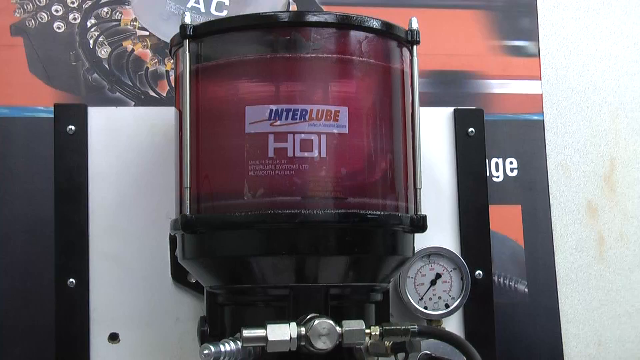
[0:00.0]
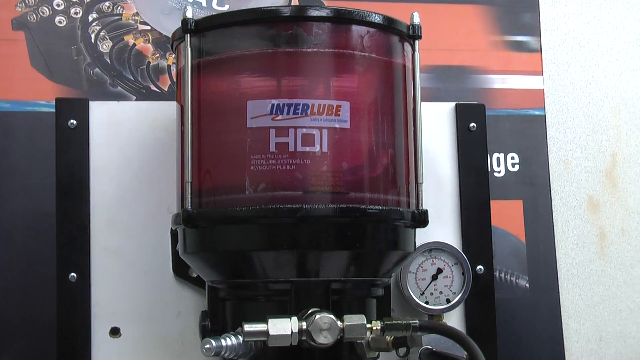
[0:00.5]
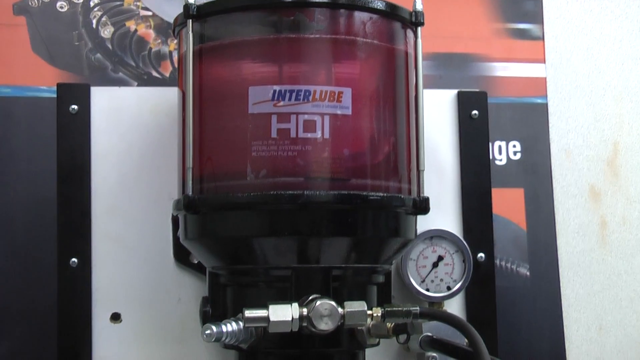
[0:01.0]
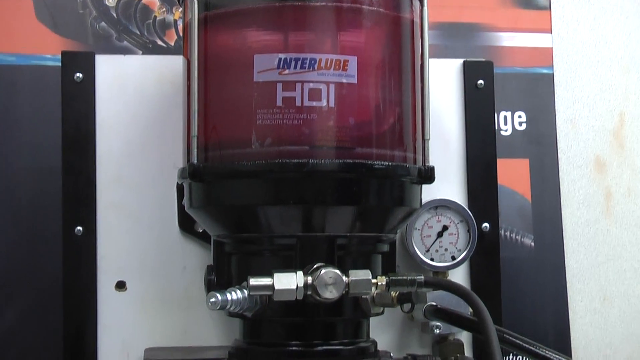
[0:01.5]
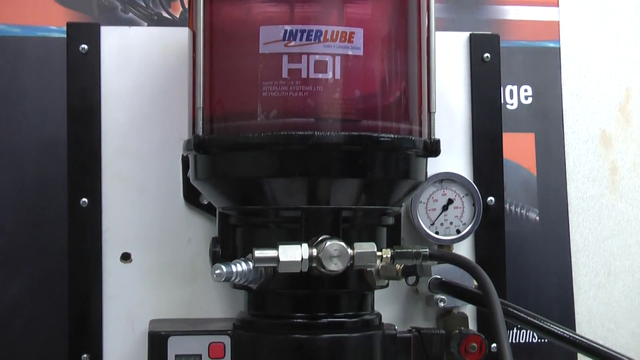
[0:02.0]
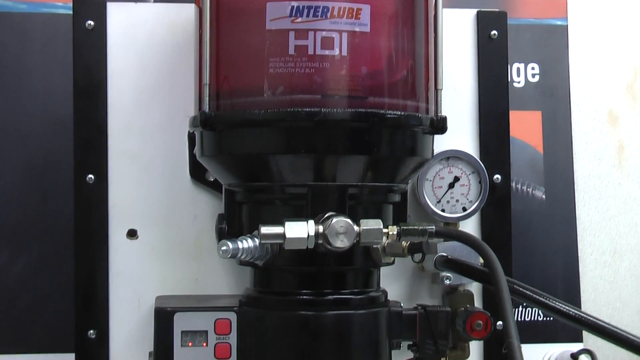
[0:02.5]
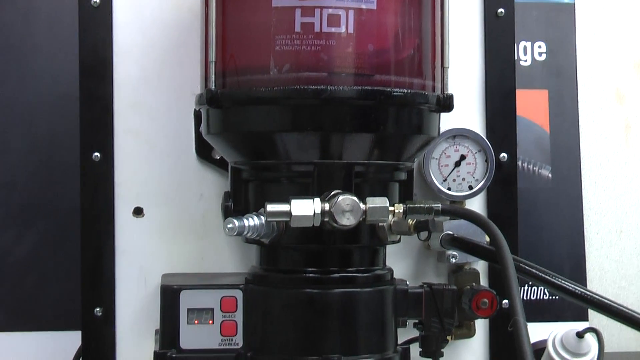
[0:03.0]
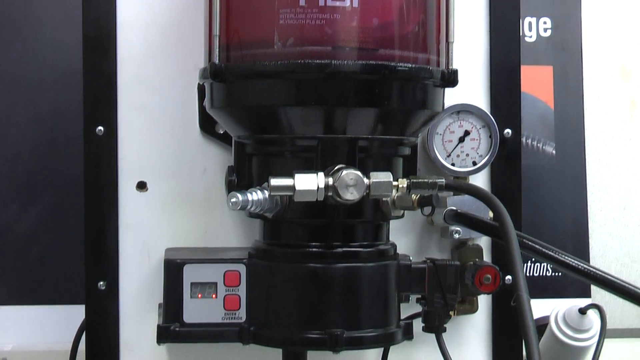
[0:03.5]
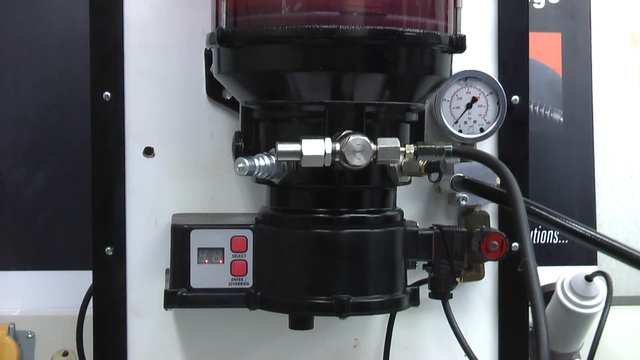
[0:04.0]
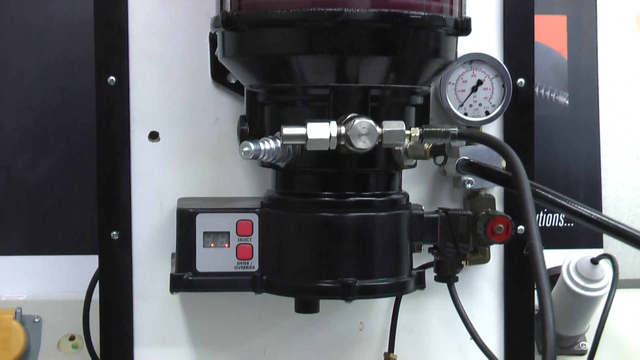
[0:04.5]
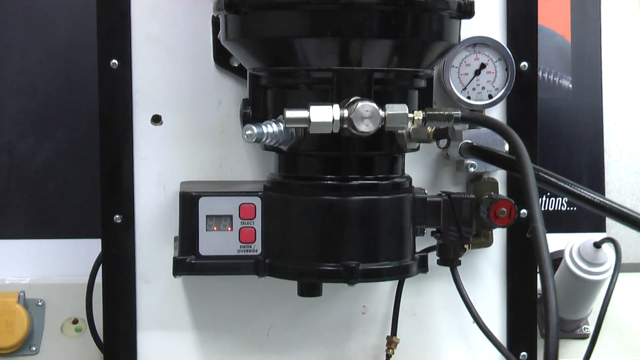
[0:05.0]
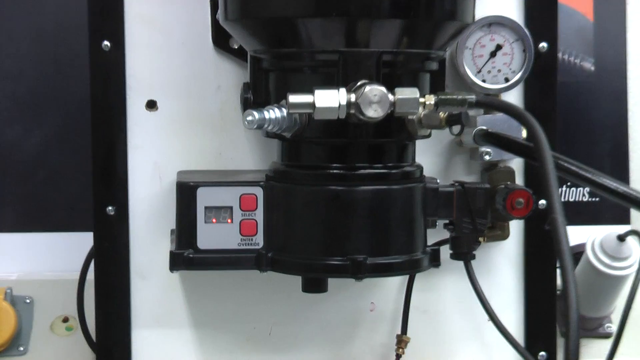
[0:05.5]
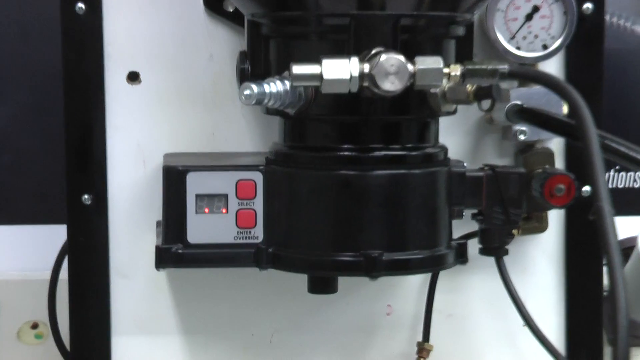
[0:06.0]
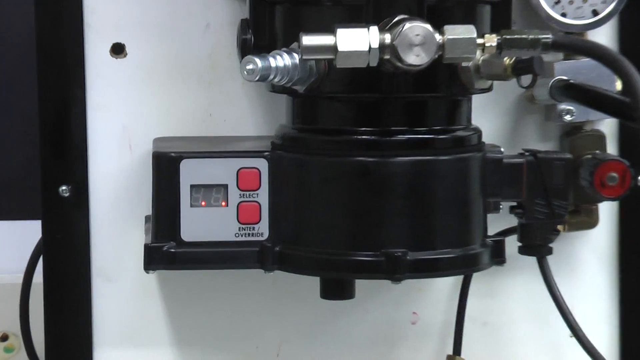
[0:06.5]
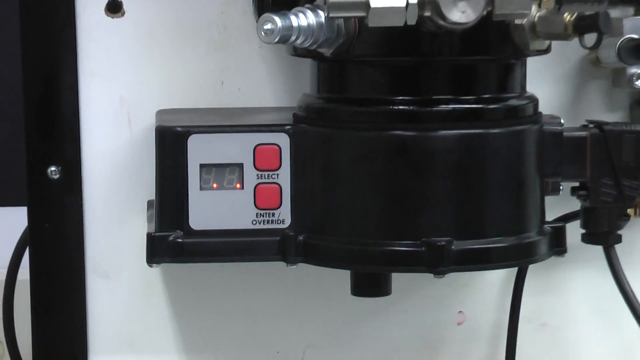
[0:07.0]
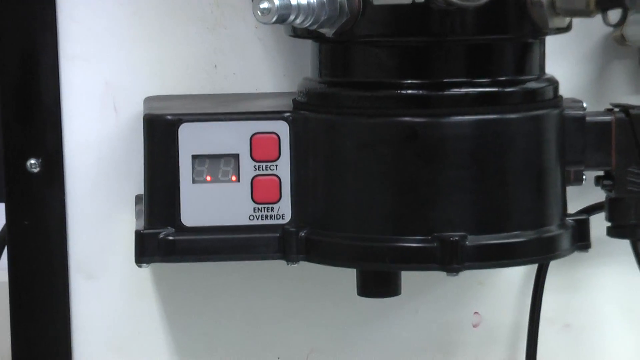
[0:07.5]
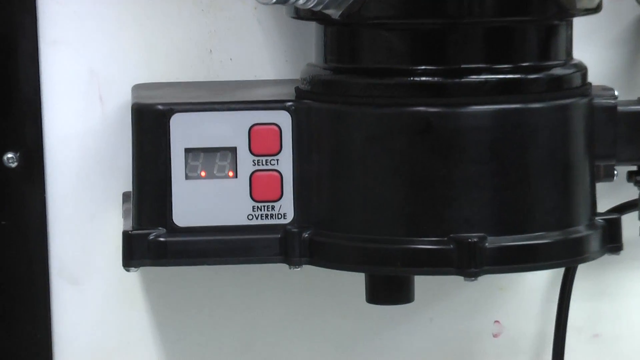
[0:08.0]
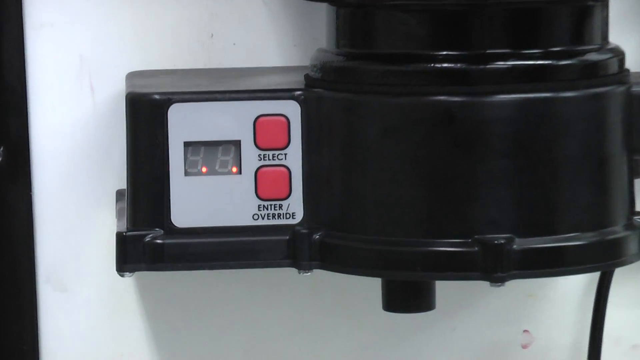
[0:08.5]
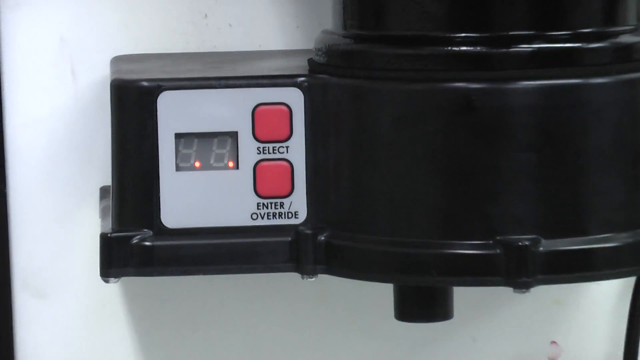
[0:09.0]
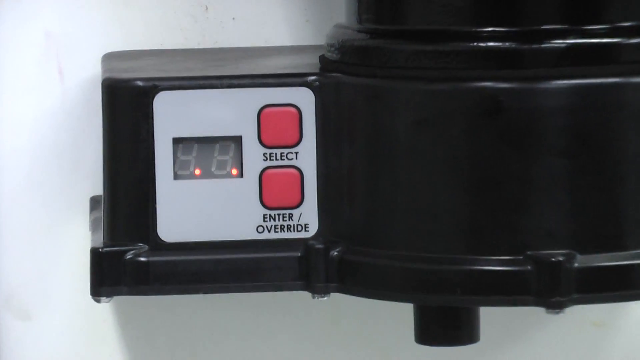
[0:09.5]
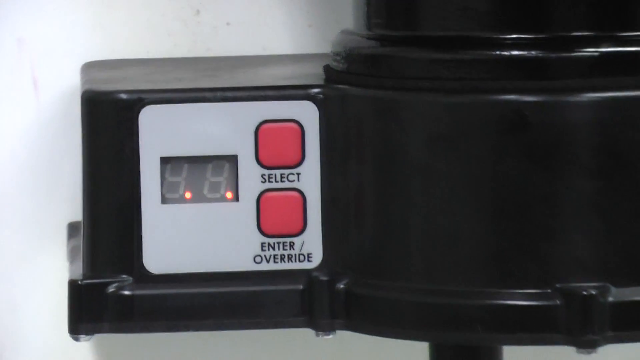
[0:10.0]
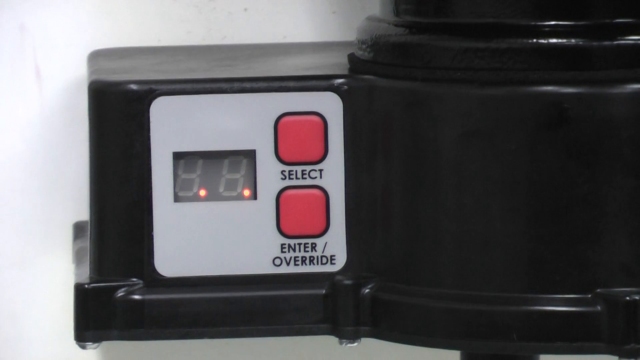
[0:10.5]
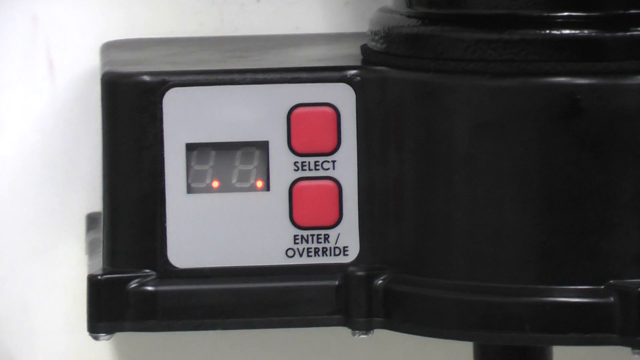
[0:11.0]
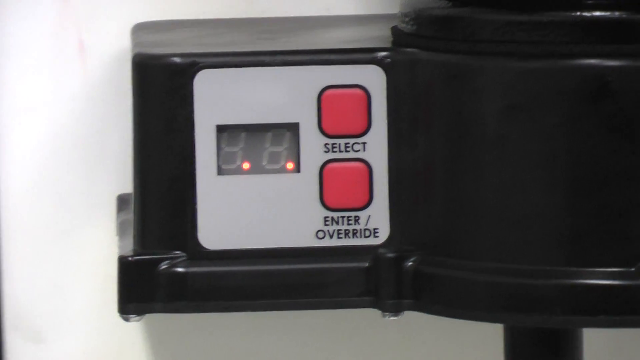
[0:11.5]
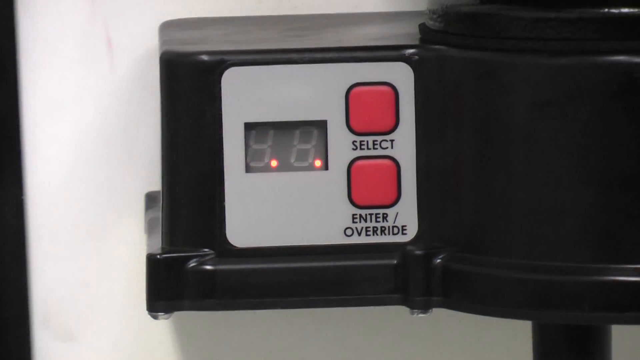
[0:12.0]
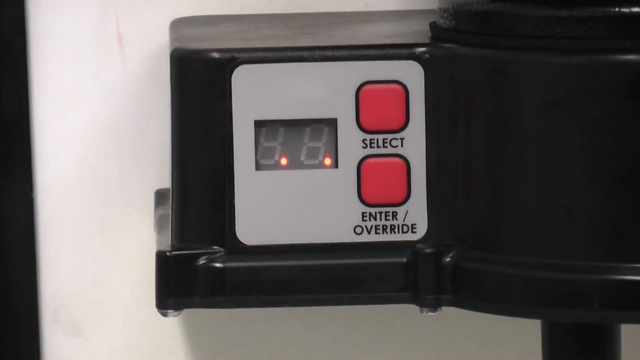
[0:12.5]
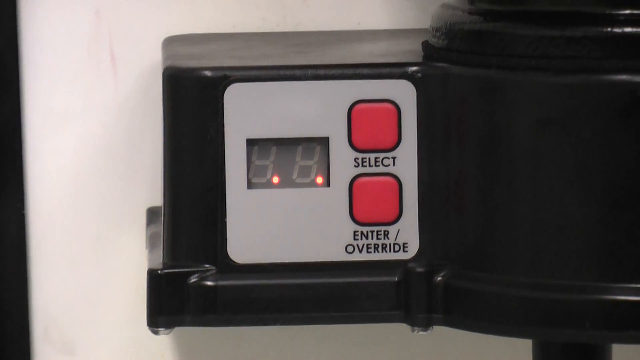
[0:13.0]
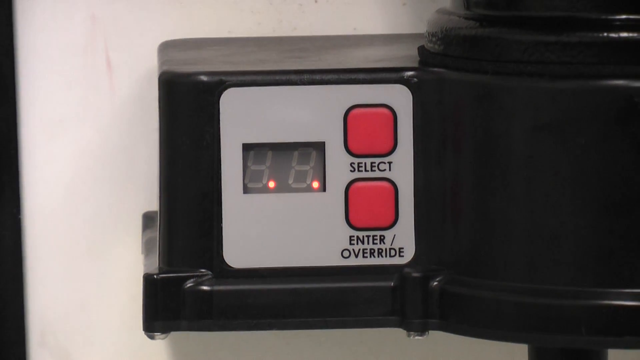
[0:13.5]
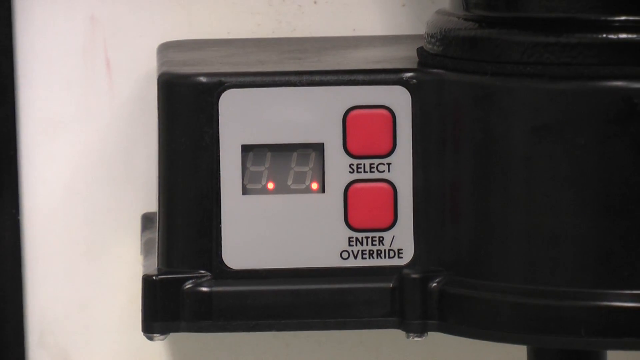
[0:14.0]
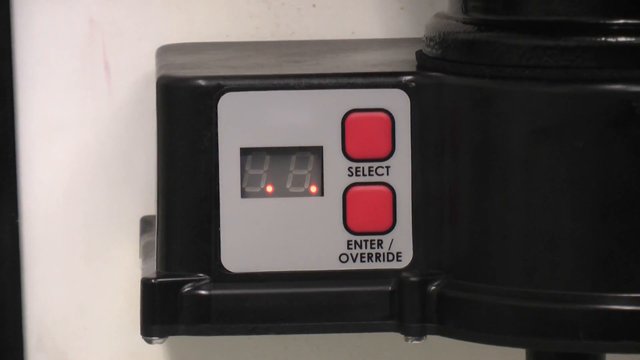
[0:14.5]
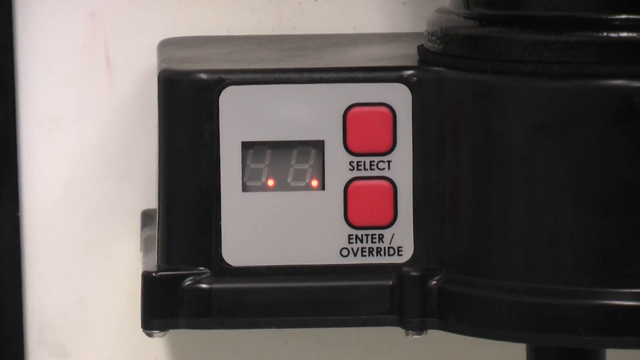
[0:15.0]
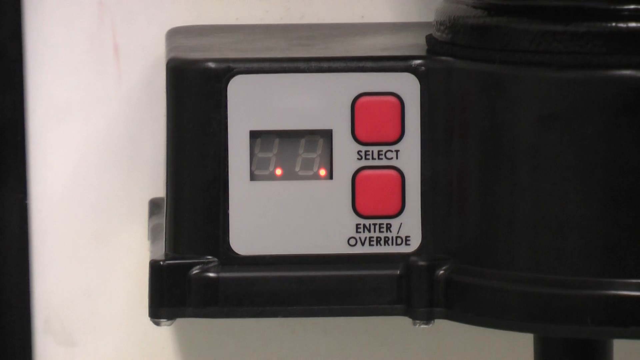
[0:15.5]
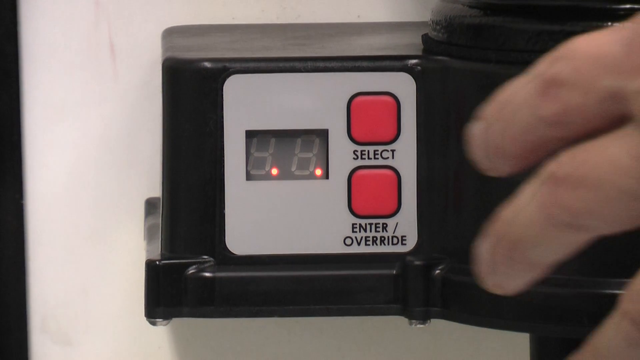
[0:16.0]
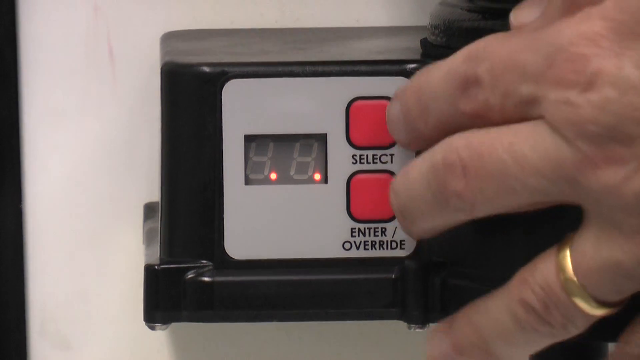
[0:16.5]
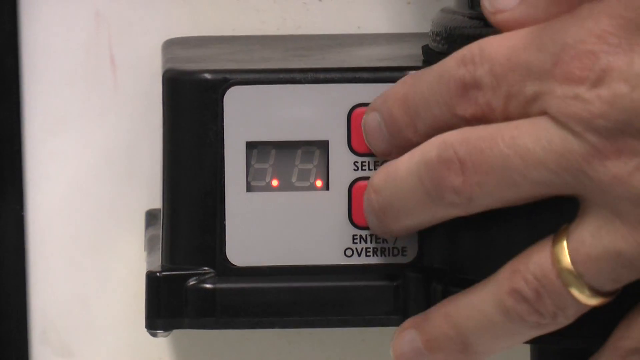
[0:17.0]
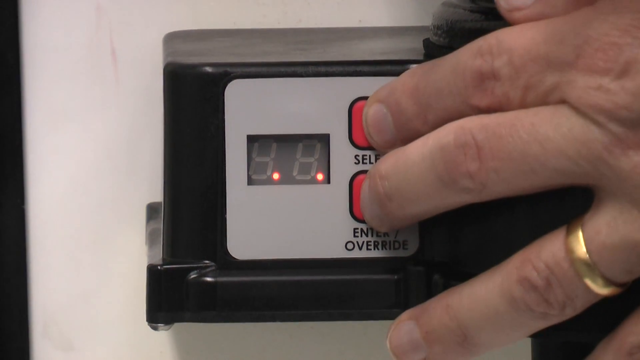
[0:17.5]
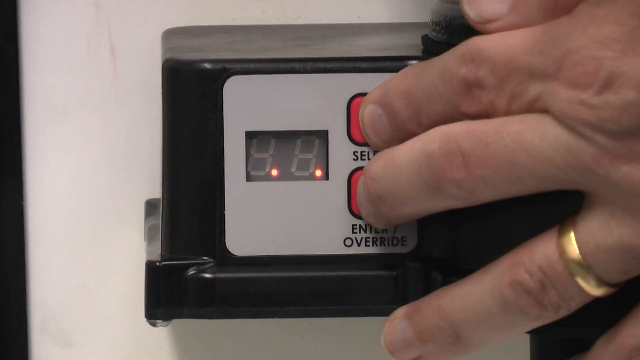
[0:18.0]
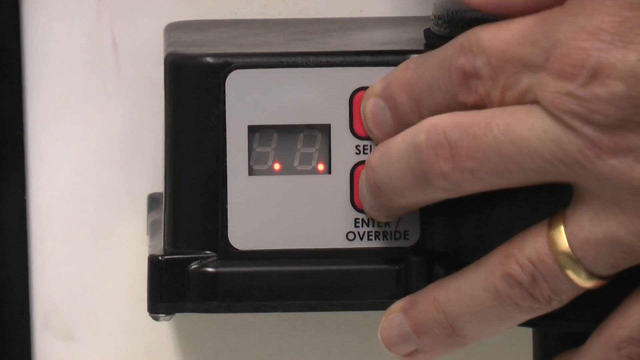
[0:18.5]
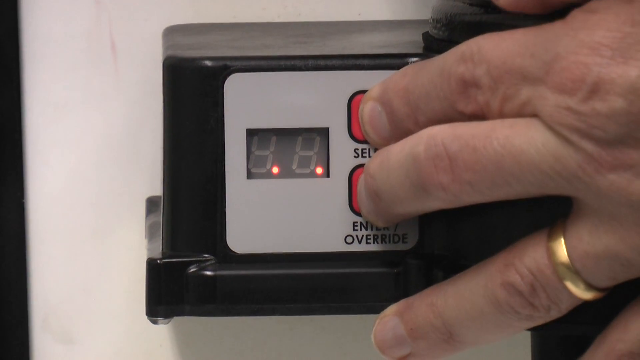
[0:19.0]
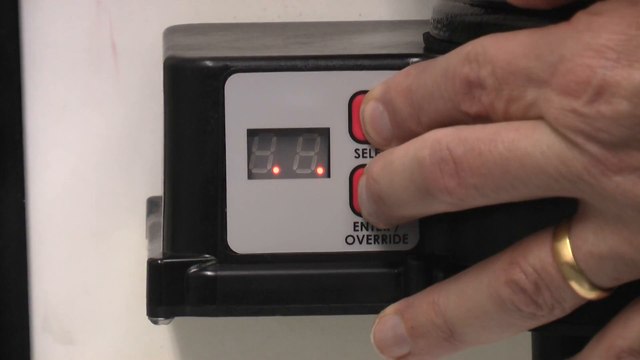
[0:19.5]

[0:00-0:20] The video shows some type of tank or gadget, with a name that appears to be Interlude HDI or something similar. It has a meter whose purpose is unclear, many tubes, and buttons labeled "select" and "enter/override," so it seems to be some type of HVAC device related to temperature. The device is black. A hand that looks like a man's, wearing a ring, enters the frame and presses both buttons at the same time. The scene is inside a building, and the room is quite bright, either from bright lights or from sunlight coming in.